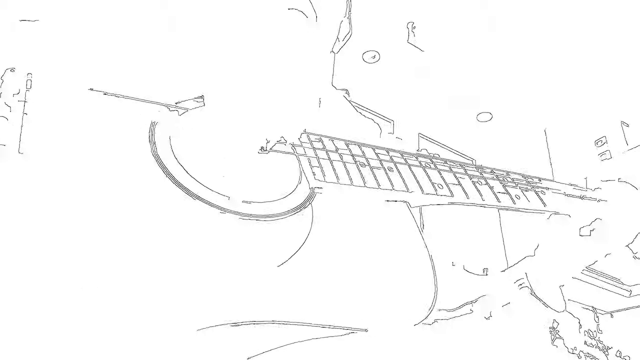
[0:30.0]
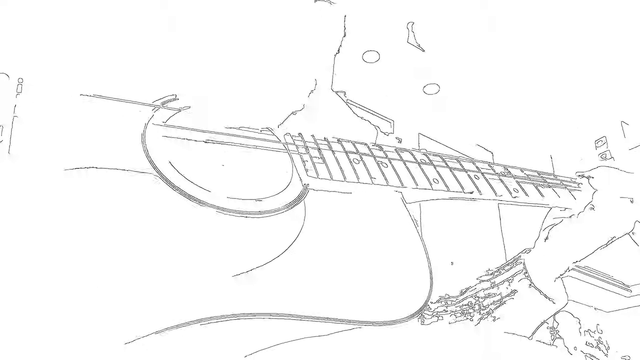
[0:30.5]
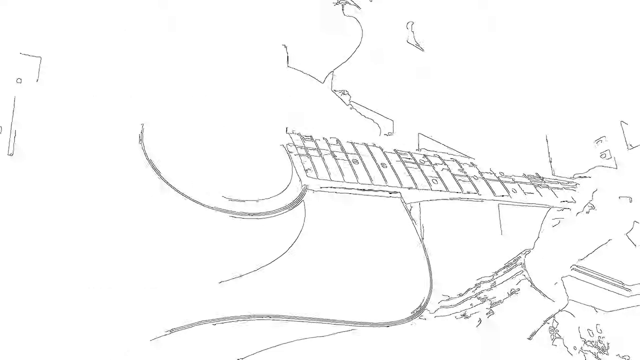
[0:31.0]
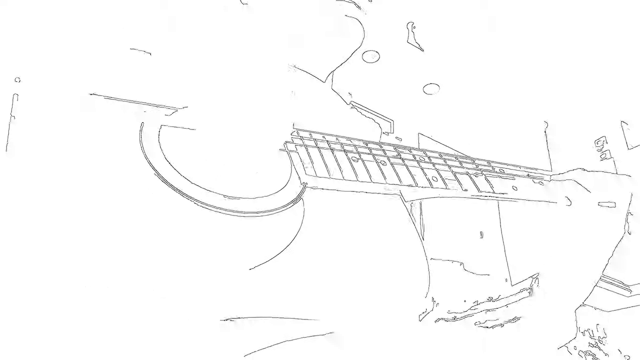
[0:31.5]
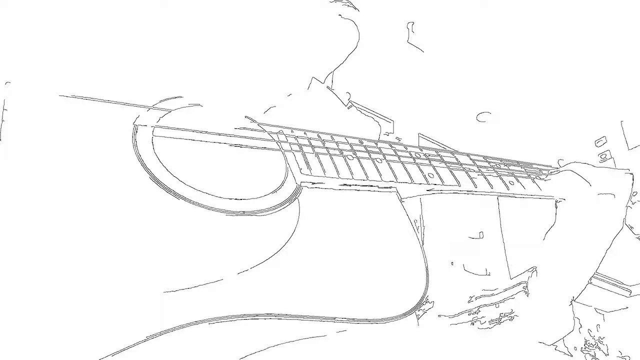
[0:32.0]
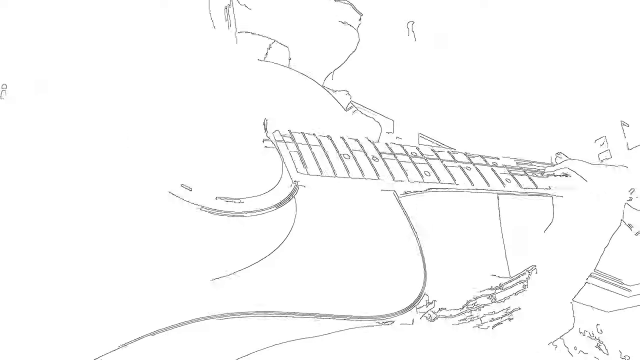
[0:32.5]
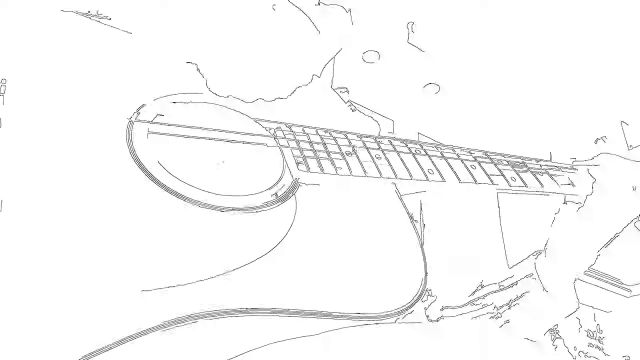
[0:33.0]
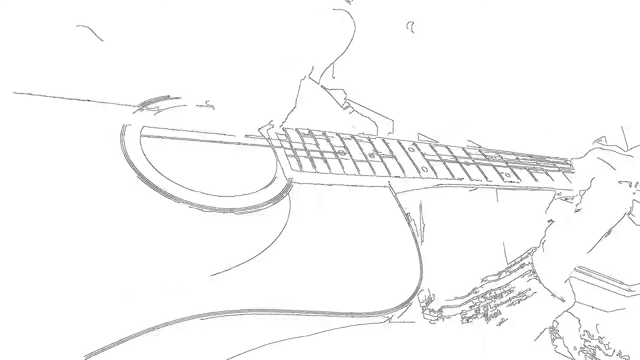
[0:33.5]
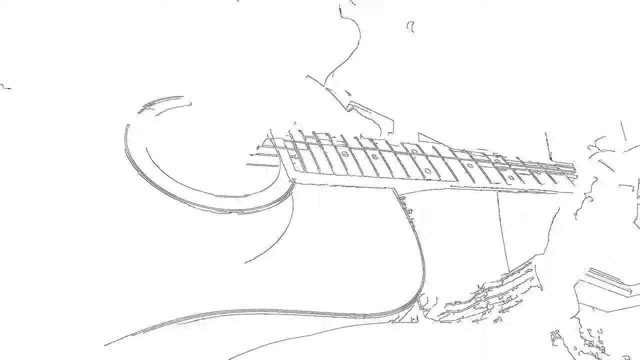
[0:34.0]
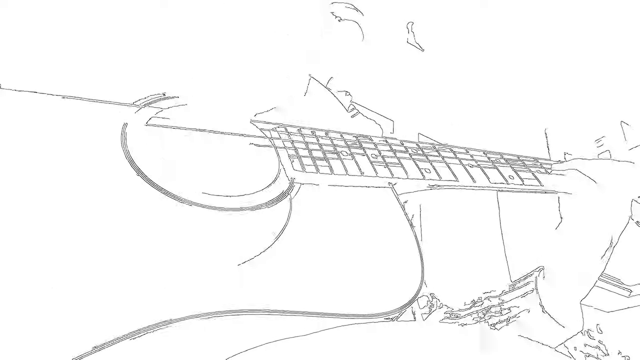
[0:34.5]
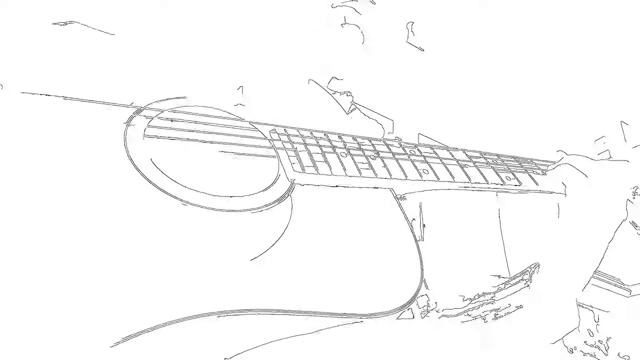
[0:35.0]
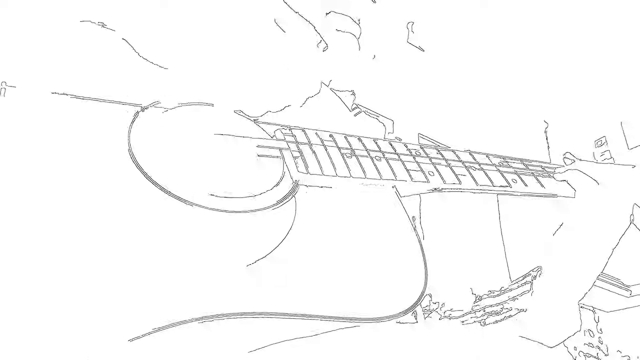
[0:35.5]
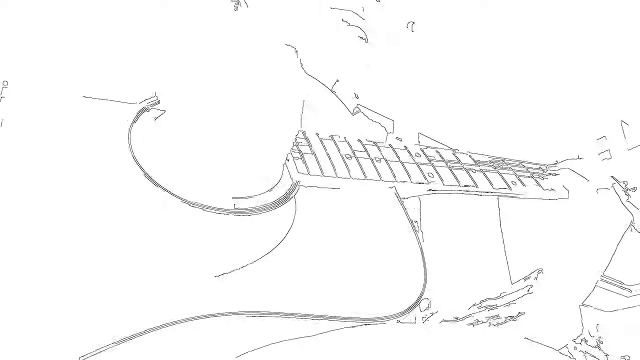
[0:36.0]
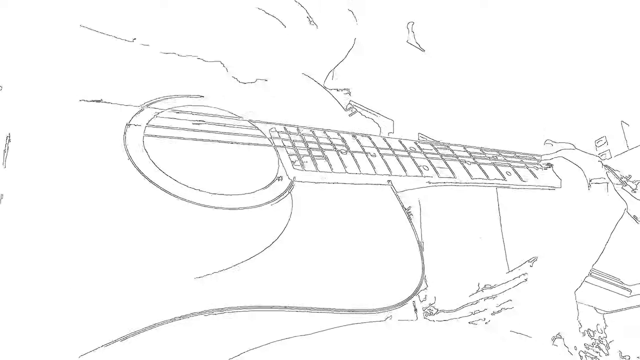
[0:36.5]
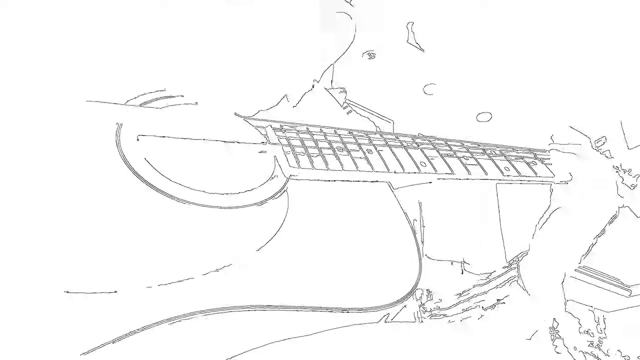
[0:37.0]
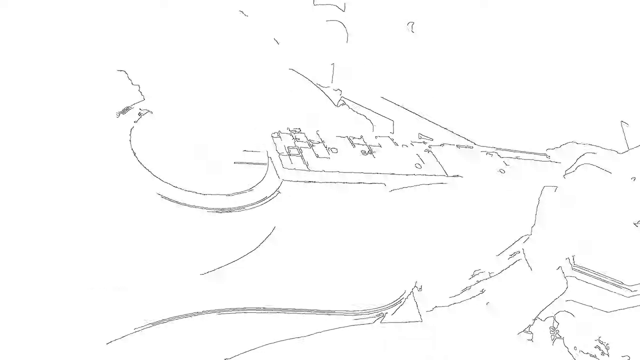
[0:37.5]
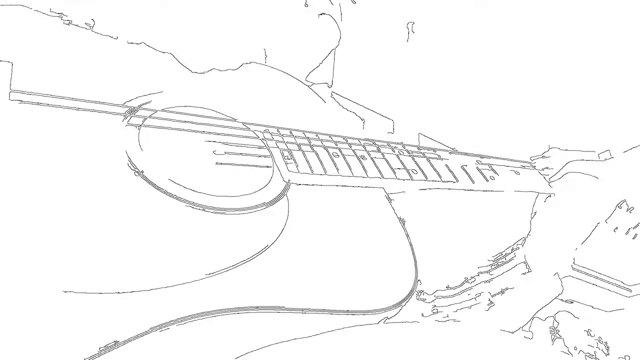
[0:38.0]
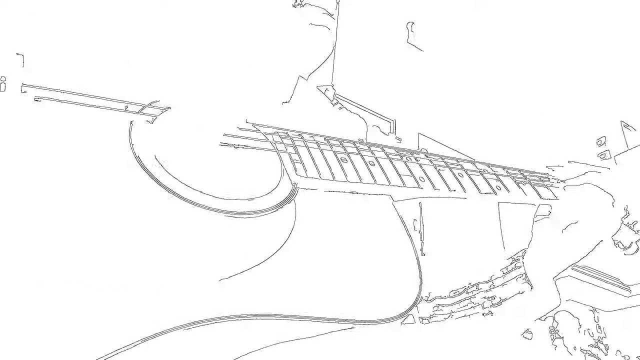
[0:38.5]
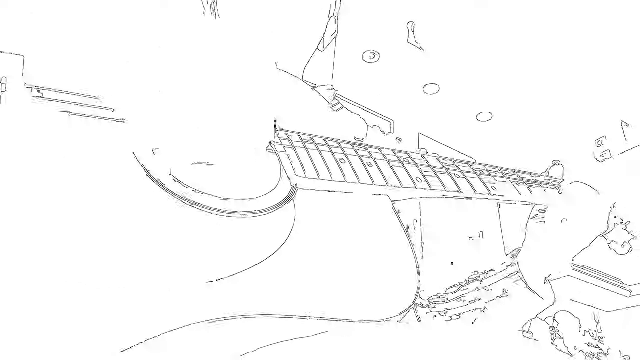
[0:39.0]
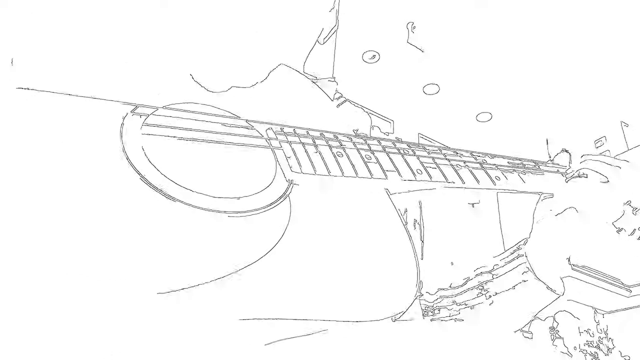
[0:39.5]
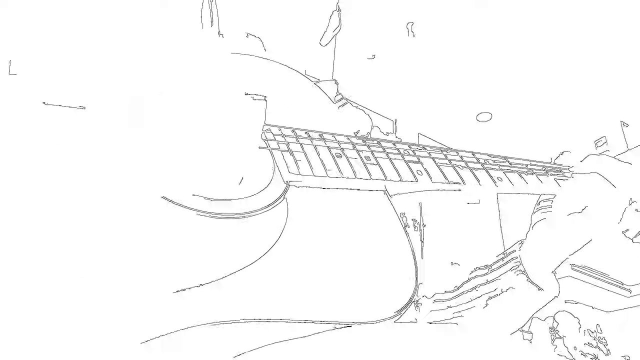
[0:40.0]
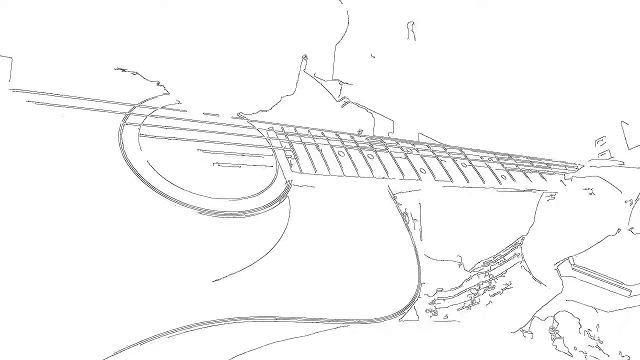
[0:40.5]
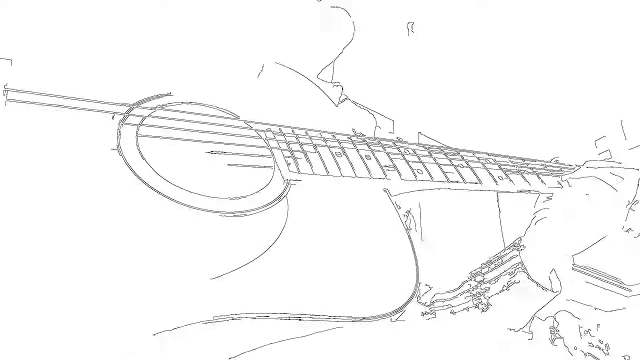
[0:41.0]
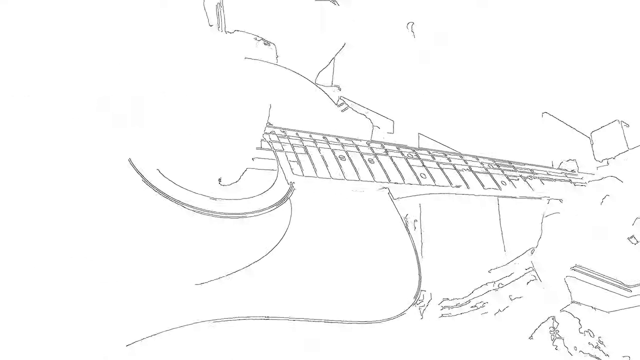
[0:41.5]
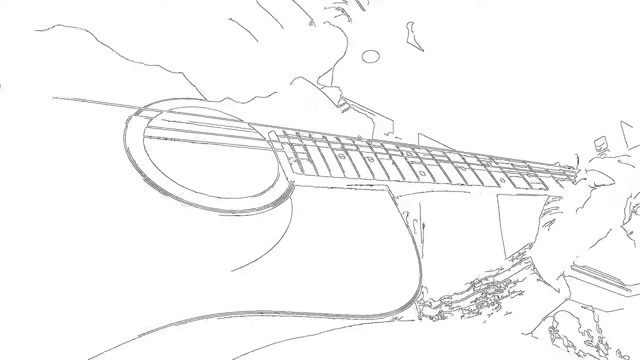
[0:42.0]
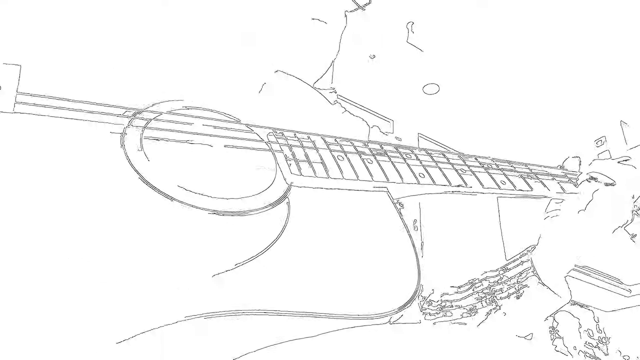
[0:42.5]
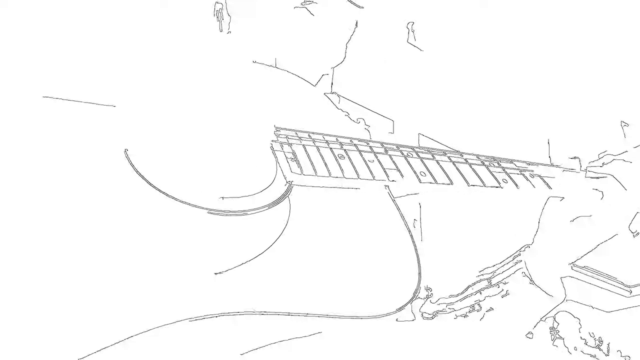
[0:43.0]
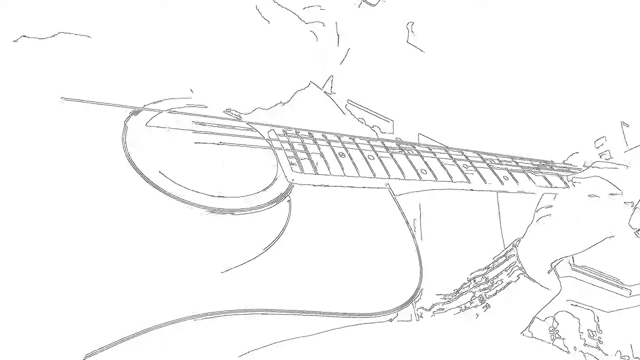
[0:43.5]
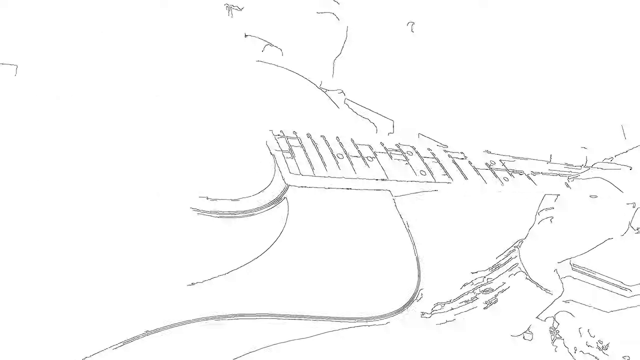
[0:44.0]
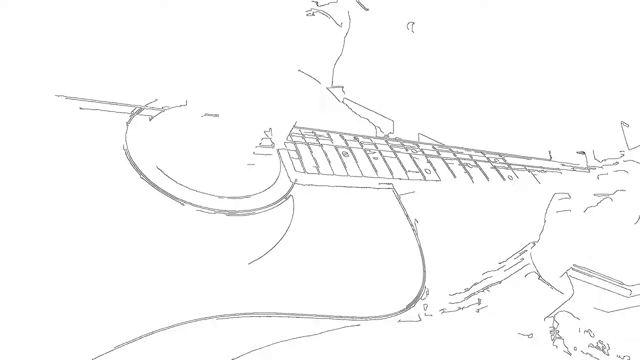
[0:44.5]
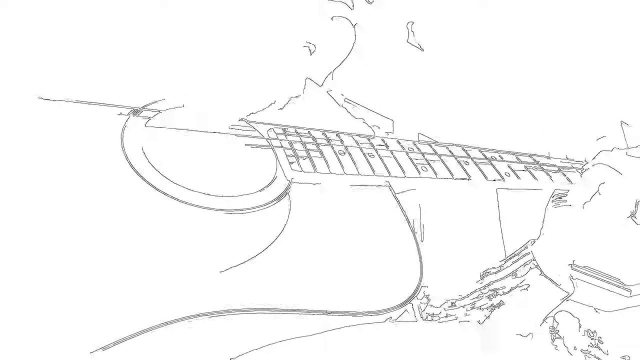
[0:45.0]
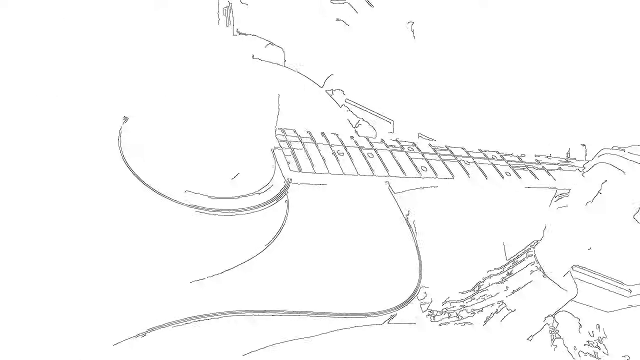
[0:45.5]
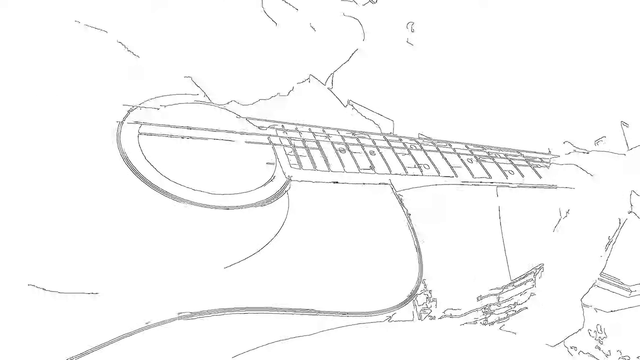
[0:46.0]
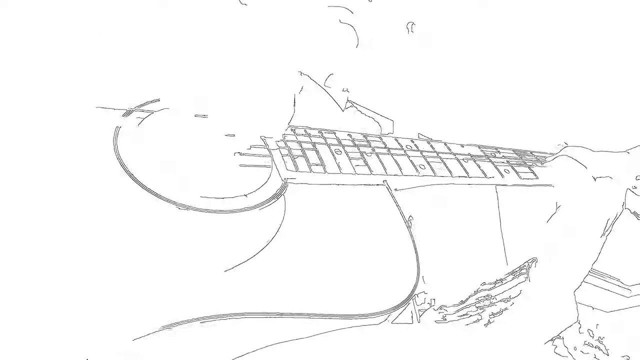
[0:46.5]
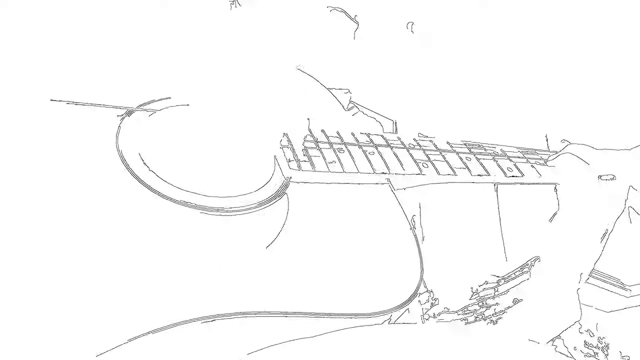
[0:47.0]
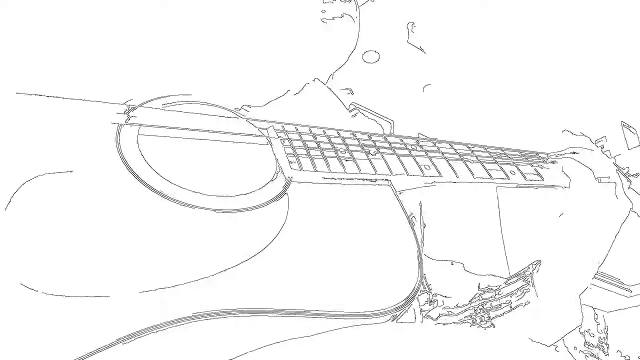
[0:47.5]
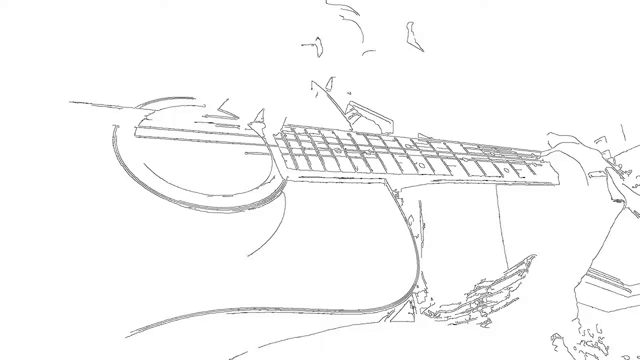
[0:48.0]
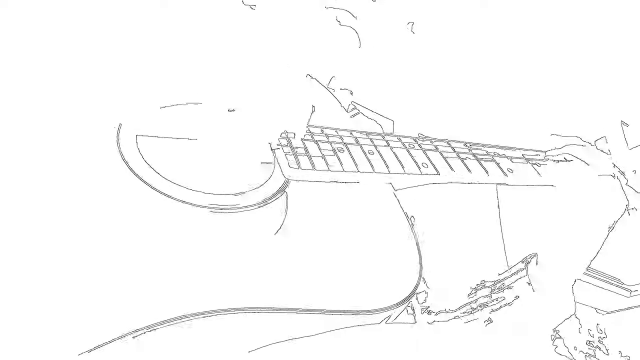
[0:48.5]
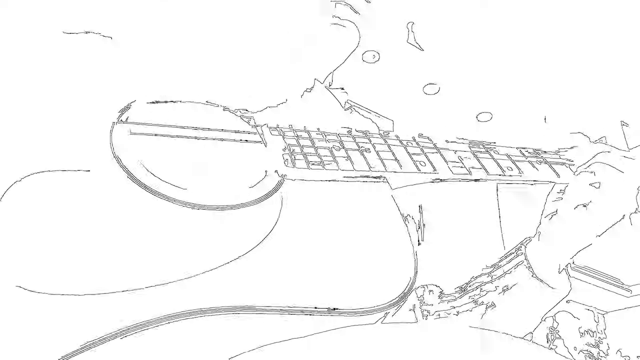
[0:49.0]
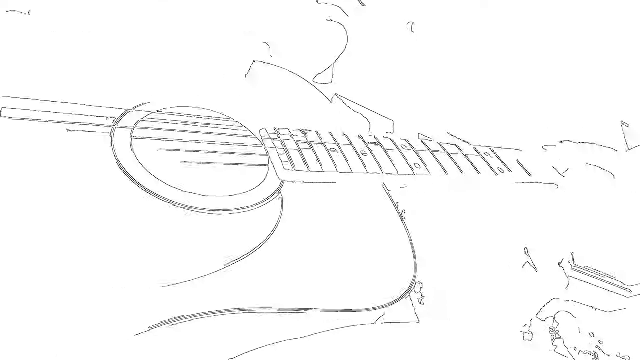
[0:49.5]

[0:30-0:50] The song continues with the man strumming the guitar on his knee. The camera is at his knee level, looking directly into the guitar, and a bit of reflection of the guitar's shape and his hand is visible despite the filter that makes the video look like an illustration. At the top of the screen his mouth moves as he sings. He strums at a medium pace, so the song seems to be a slower-tempo, sort of acoustic style. Behind him, besides the cabinets and what can be seen of an exhaust fan over a stove, there is some sort of two- or three-paned window in the center over what would be a kitchen sink. Above it is a row of sort of recessed spotlights, and above that is shelving with various items, including what looks like a bottle. To the right, over the cabinets, is a similar space with the box of what looks like a kitchen appliance. The man continues to look from side to side and sing with his mouth just out of view, as though there is a microphone or other equipment above the camera's eyeline.